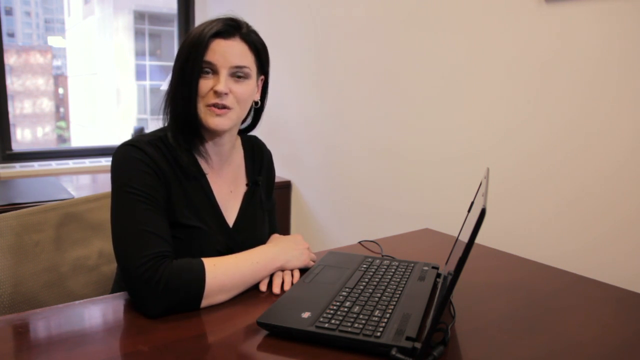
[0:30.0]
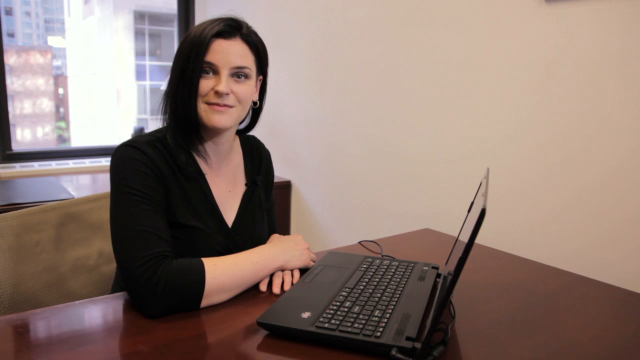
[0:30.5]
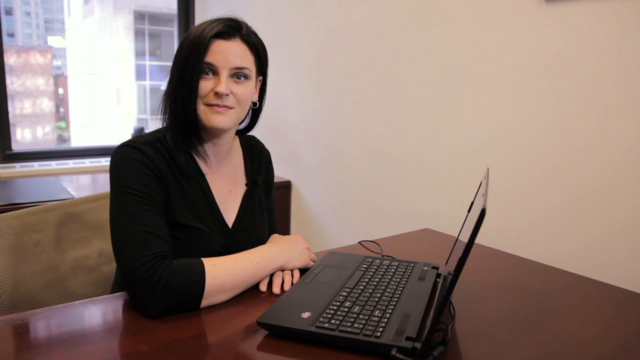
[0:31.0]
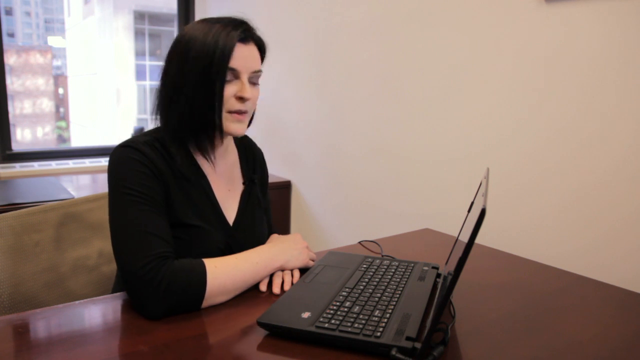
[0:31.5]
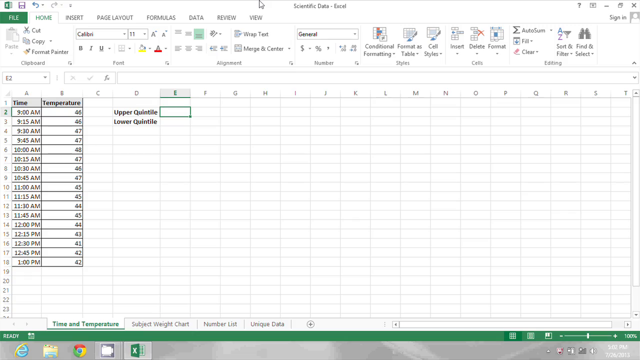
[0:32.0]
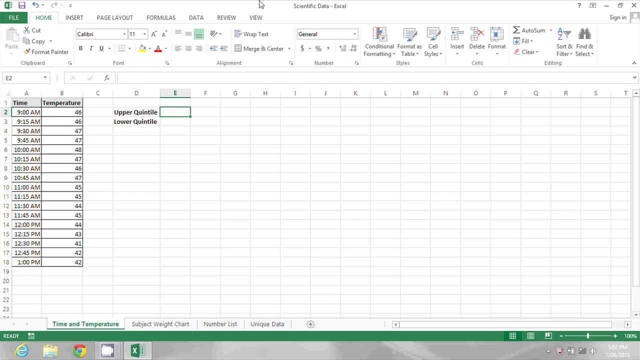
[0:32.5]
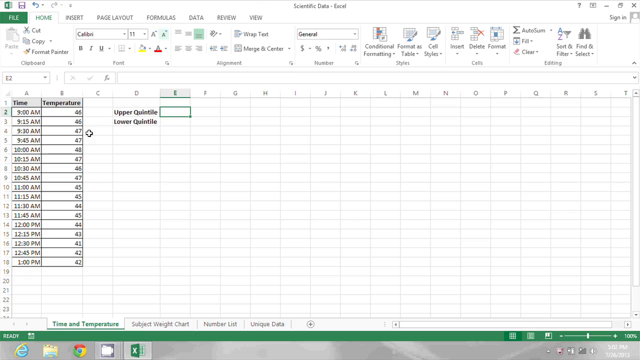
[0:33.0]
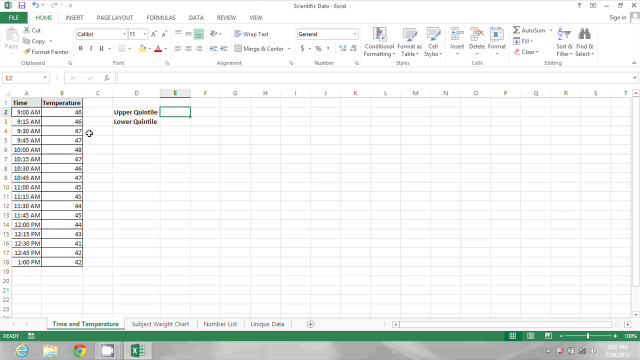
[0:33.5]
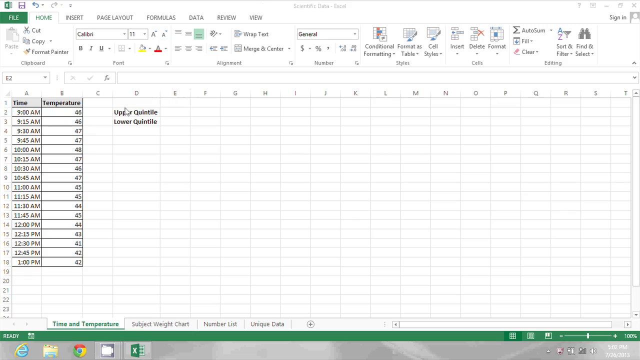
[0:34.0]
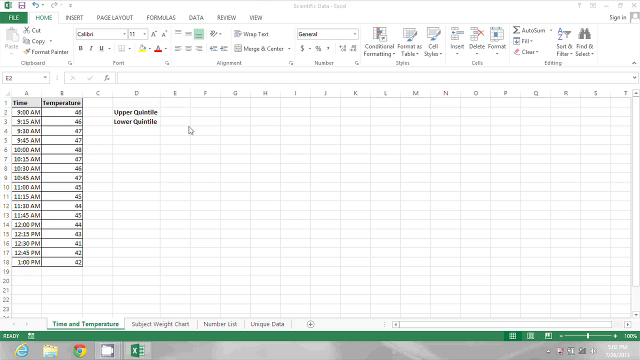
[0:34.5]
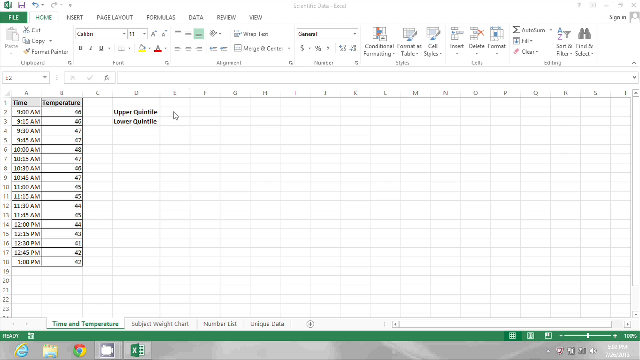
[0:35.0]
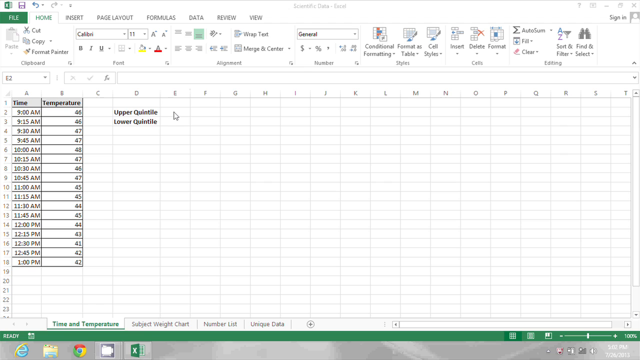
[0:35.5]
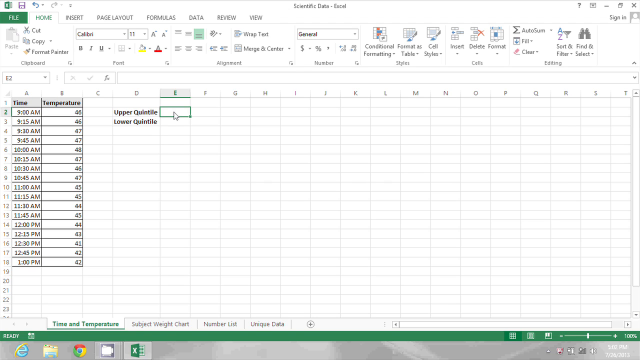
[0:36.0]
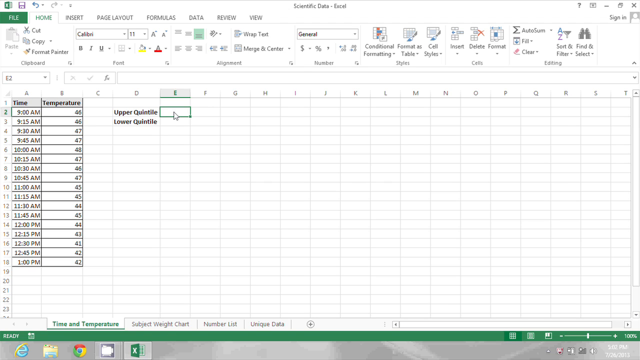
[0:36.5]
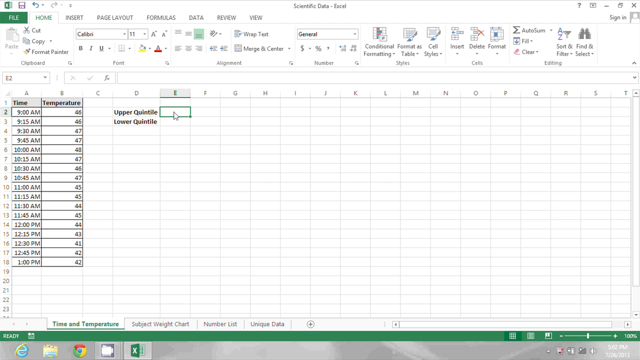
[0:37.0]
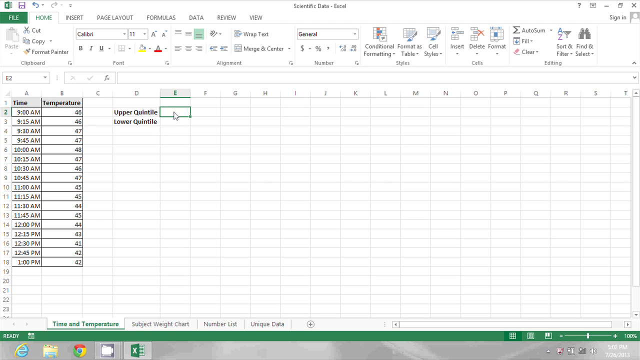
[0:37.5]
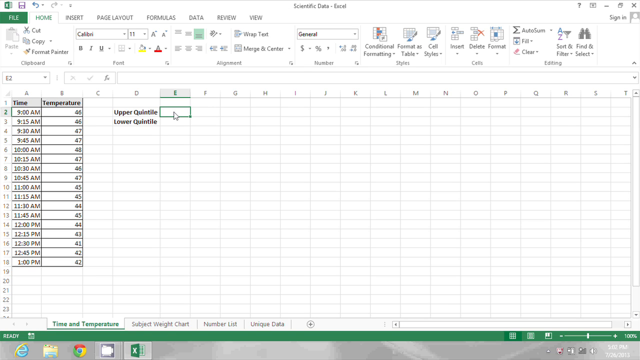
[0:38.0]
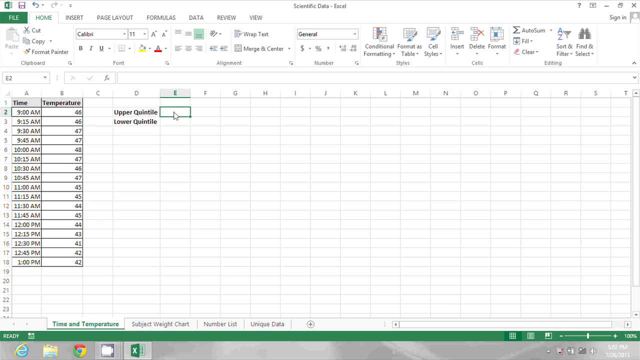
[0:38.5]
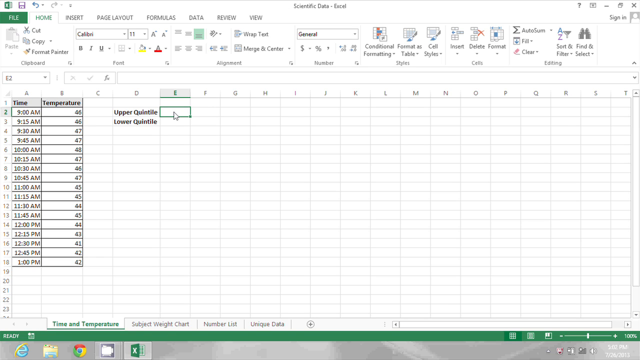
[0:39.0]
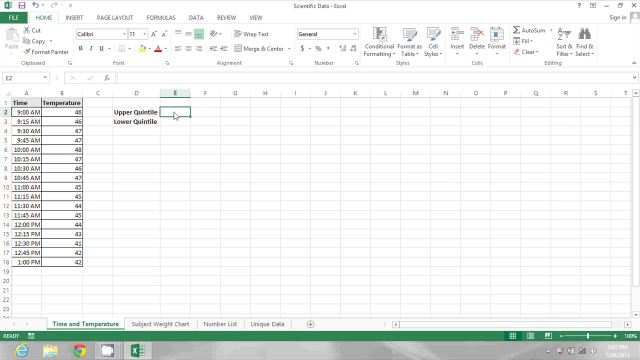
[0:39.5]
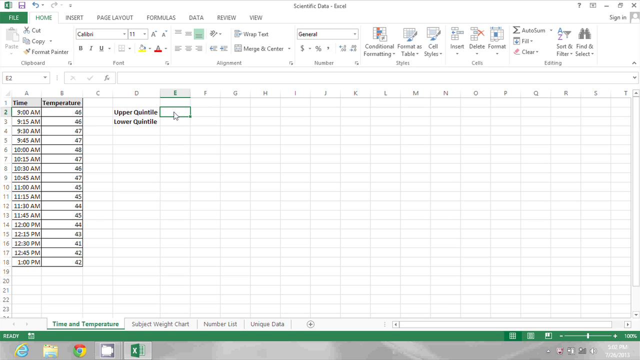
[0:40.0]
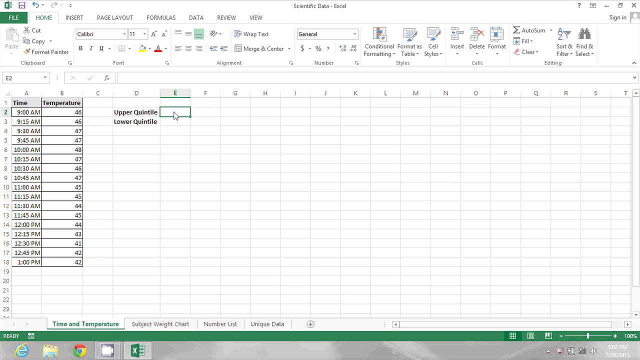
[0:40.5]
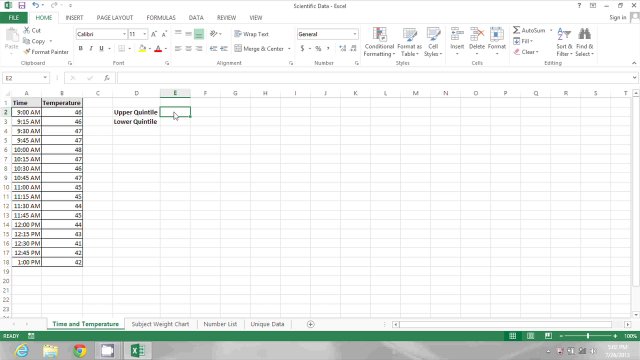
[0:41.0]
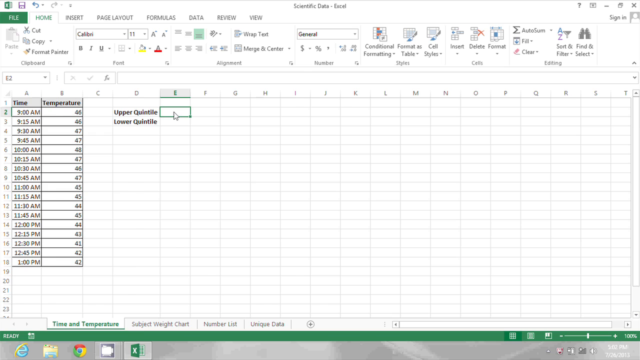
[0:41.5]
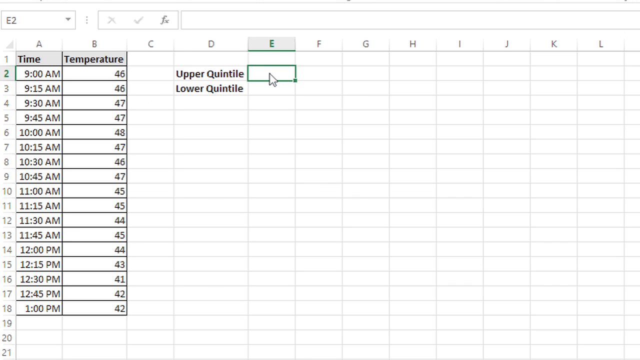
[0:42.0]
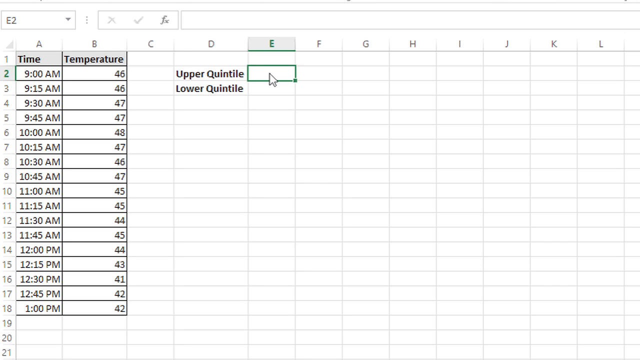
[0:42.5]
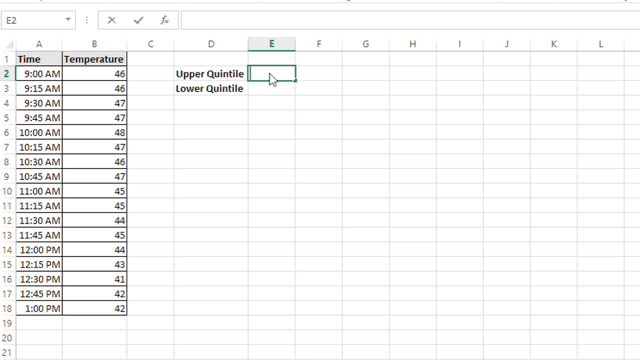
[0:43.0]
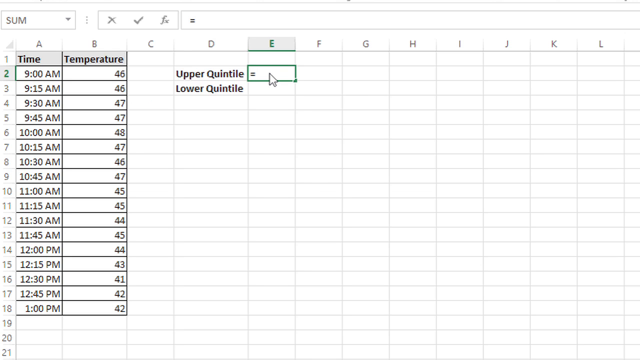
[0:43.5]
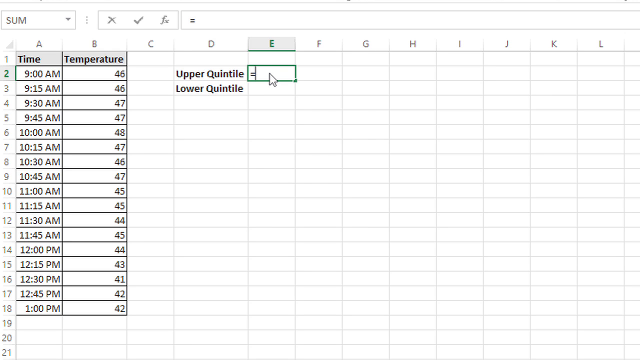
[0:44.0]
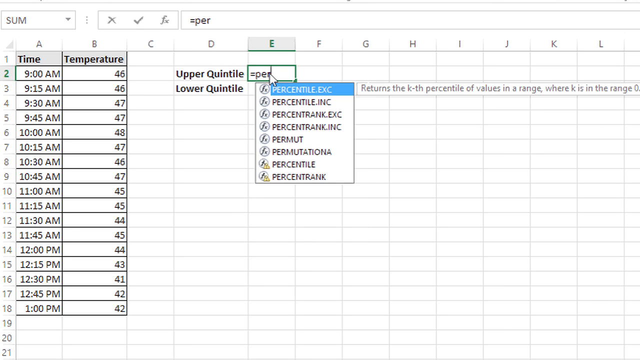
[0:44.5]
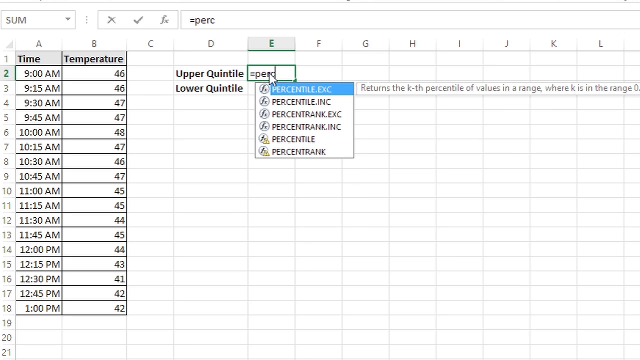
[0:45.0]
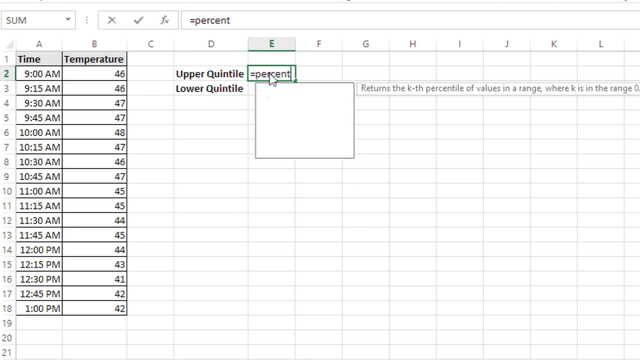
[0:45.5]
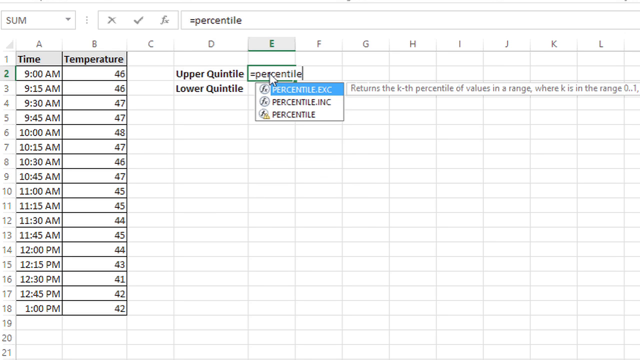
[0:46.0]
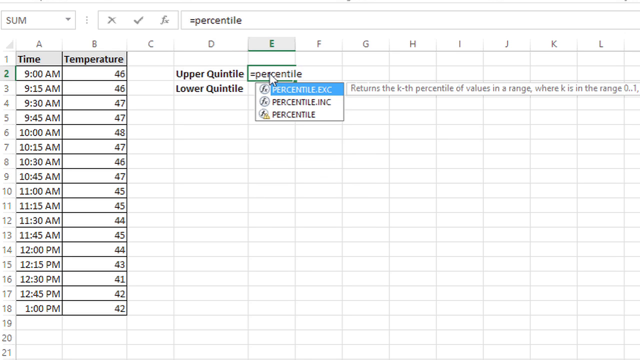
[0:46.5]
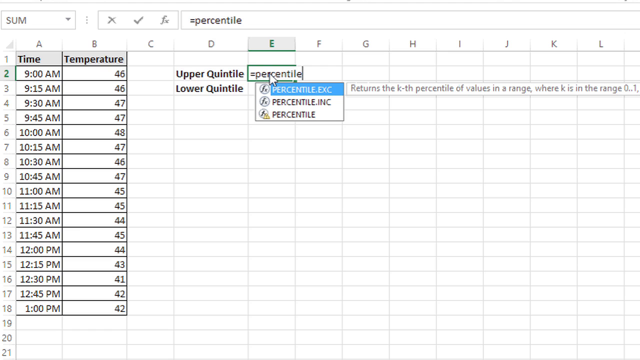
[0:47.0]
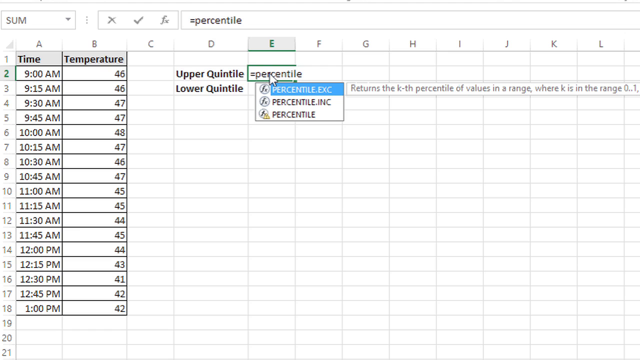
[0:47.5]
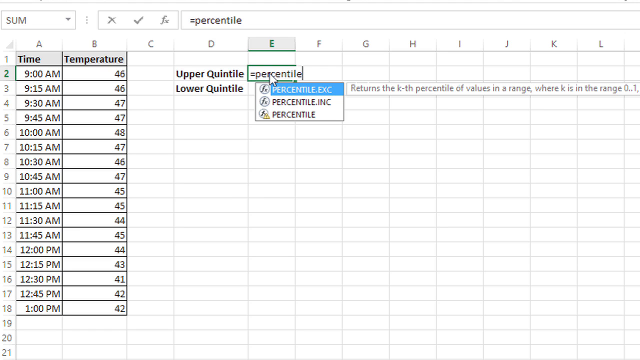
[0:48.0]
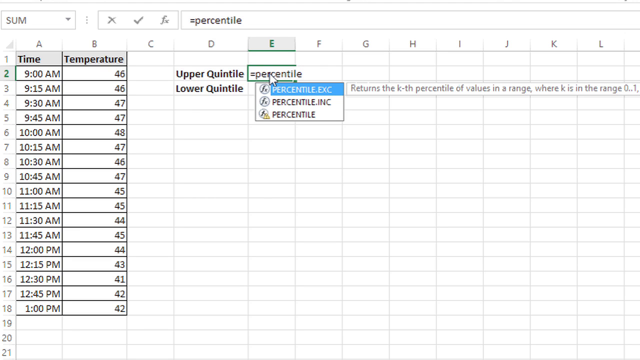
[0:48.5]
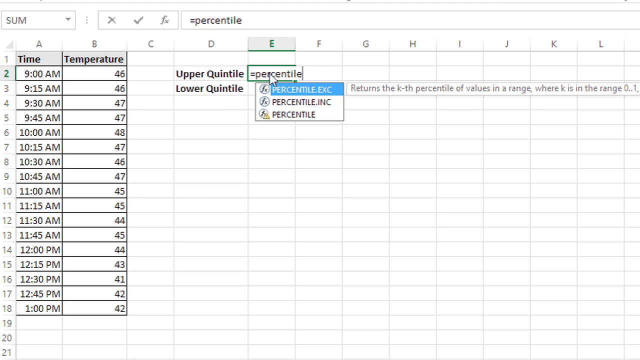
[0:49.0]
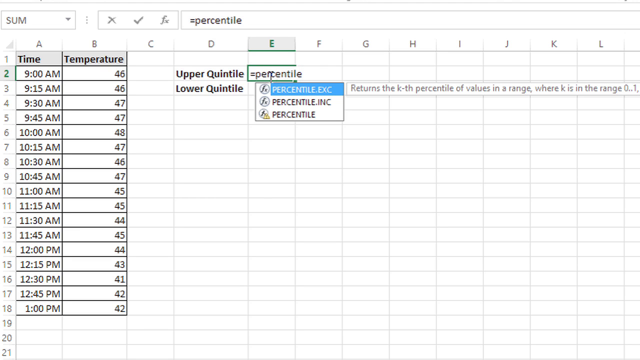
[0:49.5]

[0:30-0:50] The woman, in a V-neck blouse with sleeves just below the elbow, rests her right elbow on the brown wooden desk with both hands on the desk, her right hand underneath her left palm. She sits in a brown fabric chair with a large black laptop on the desk in front of her. Her body is angled toward the bottom right corner of the screen while her face looks straight at the camera. Her shoulder-length black hair is brushed onto her right side and shoulder, and she wears silver hoop earrings. Behind her, a large window shows she is in an office in a tall building in some kind of urban environment, with a white skyscraper with large window panels on its front across the road. She talks toward the camera, occasionally moving her right hand to emphasize her points, then smiles and looks down toward the laptop. The video cuts to a screen recording, presumably of the laptop, showing an Excel sheet labeled at the top "Scientific Data." Column A reads "Time" and lists multiple times; column B reads "Temperature" and lists multiple temperatures, all starting with the number 4. The mouse cursor appears and she clicks in column E, and the screen zooms in as the person types.